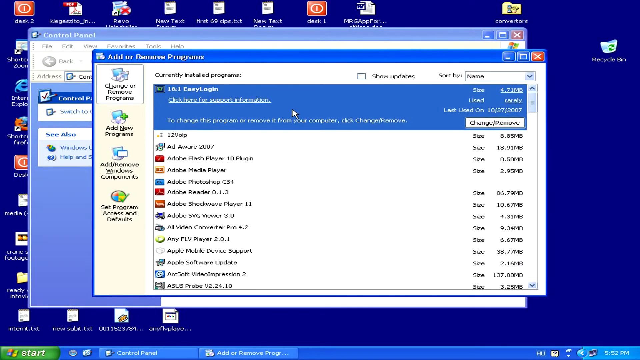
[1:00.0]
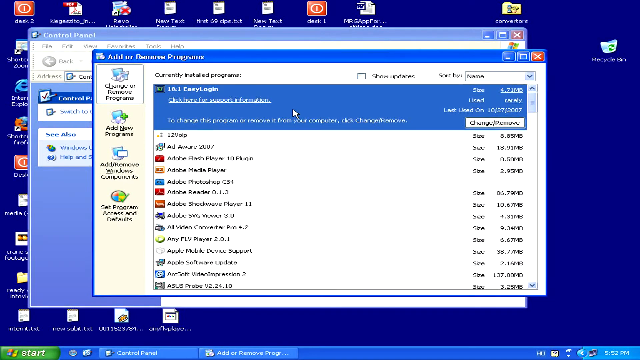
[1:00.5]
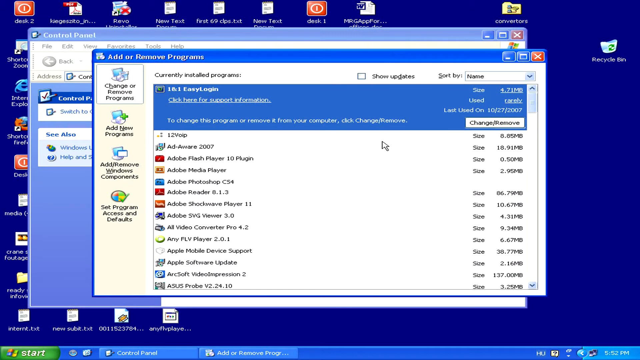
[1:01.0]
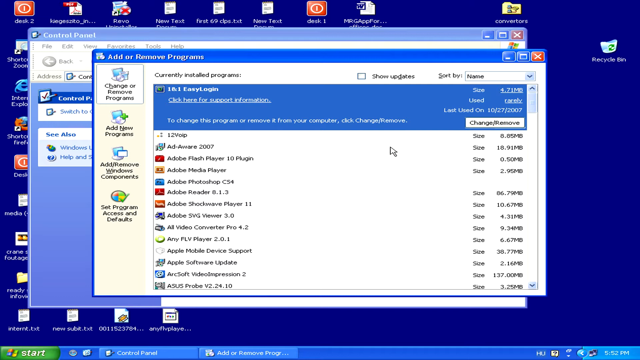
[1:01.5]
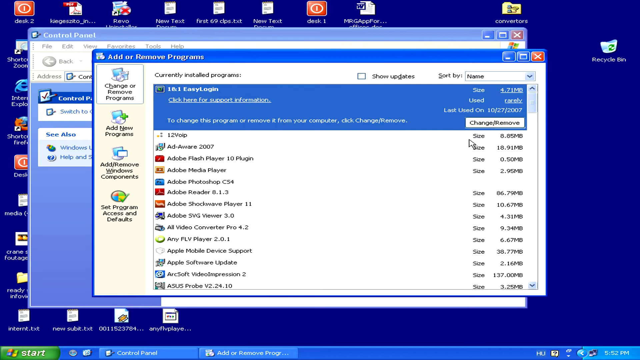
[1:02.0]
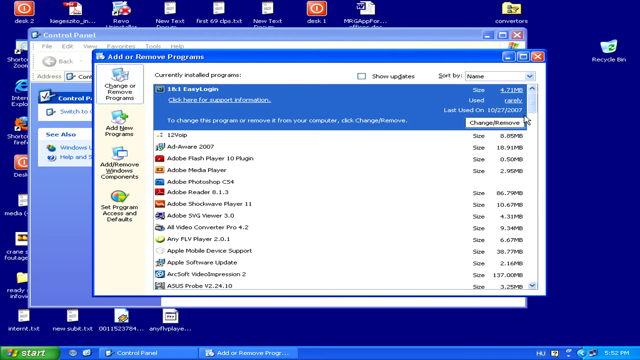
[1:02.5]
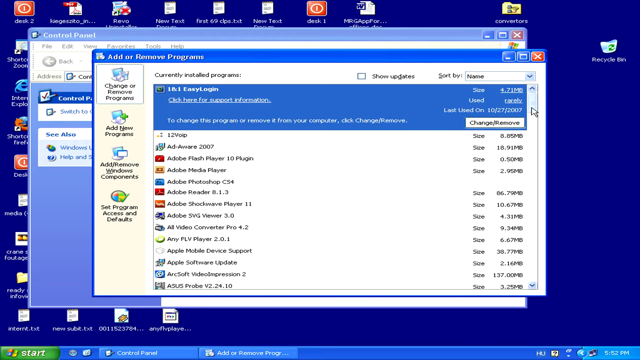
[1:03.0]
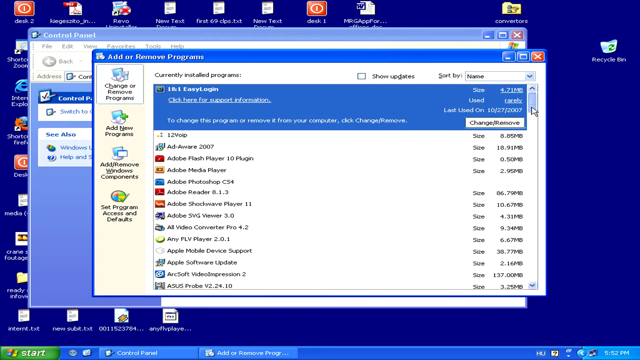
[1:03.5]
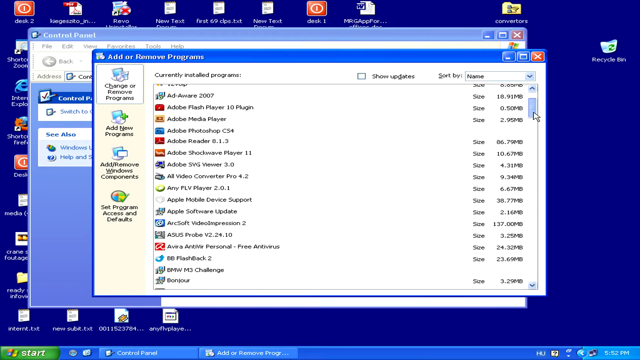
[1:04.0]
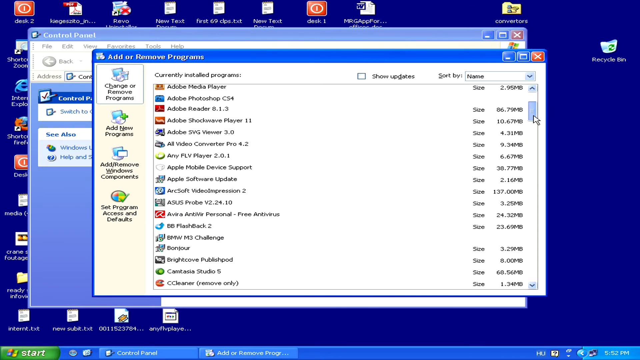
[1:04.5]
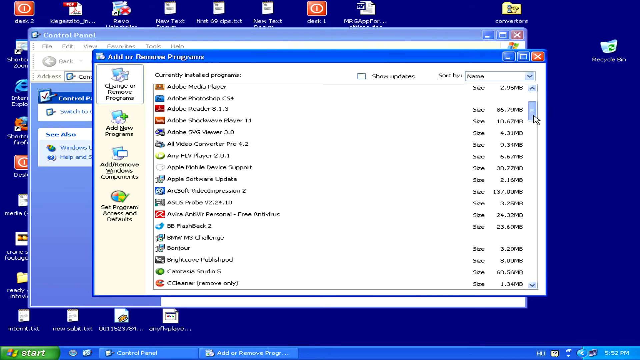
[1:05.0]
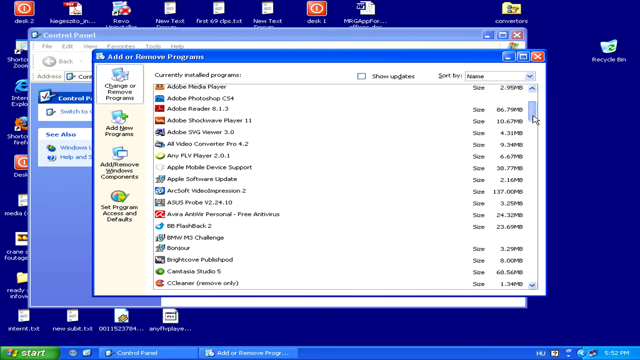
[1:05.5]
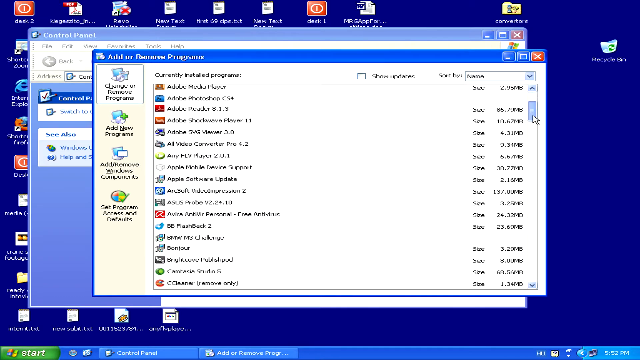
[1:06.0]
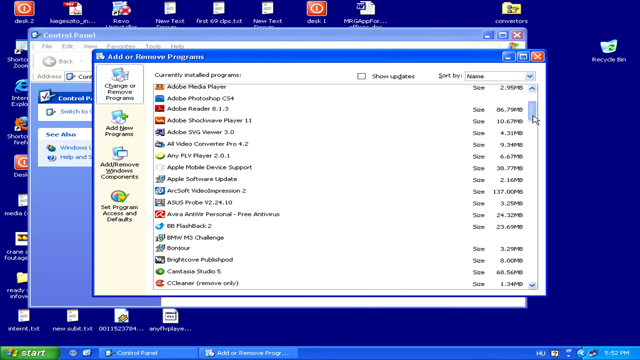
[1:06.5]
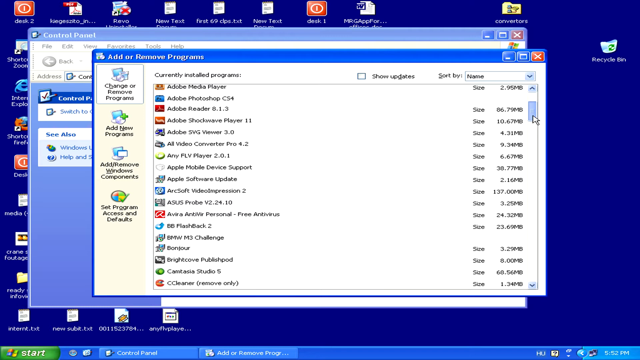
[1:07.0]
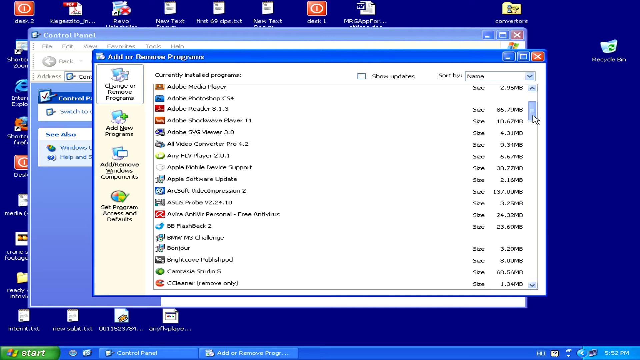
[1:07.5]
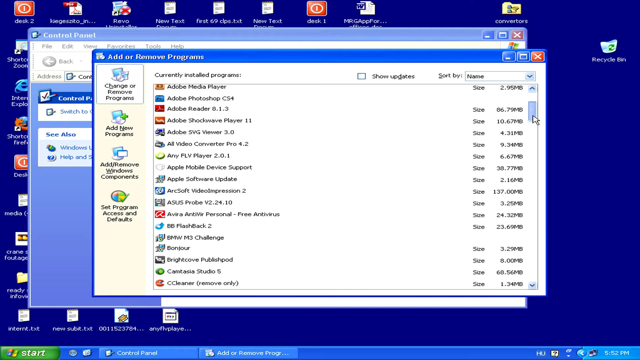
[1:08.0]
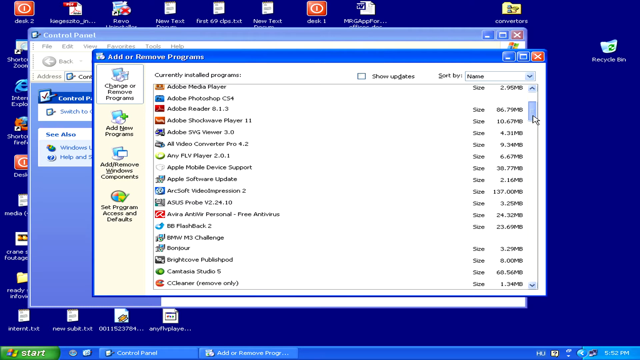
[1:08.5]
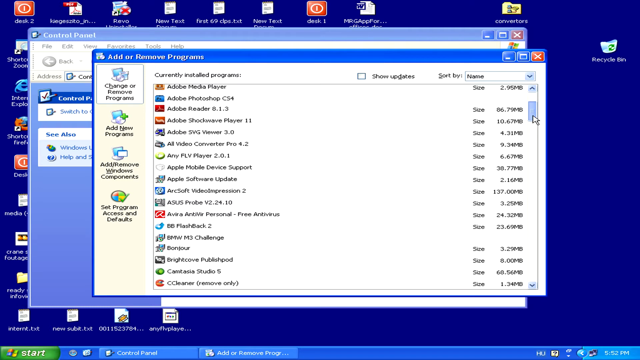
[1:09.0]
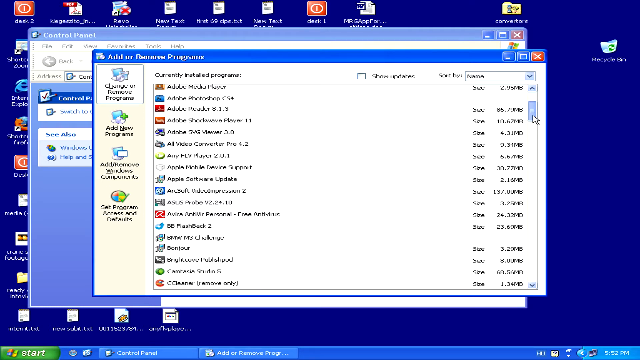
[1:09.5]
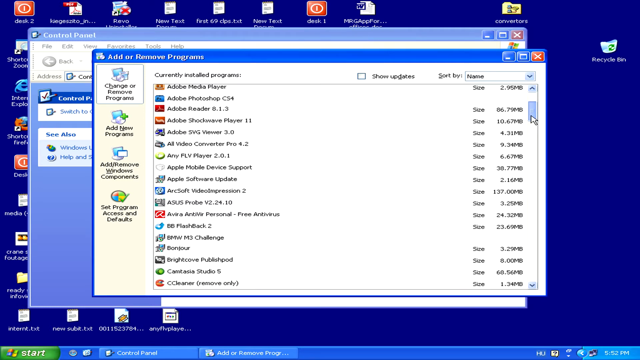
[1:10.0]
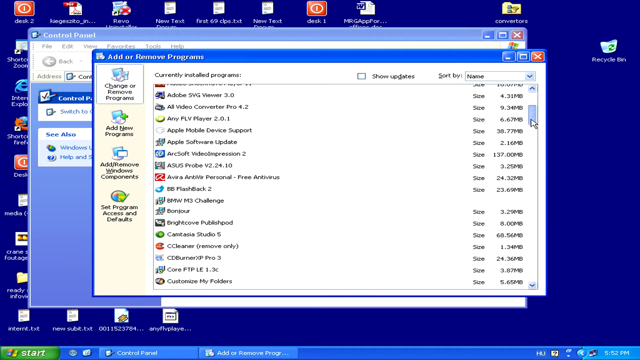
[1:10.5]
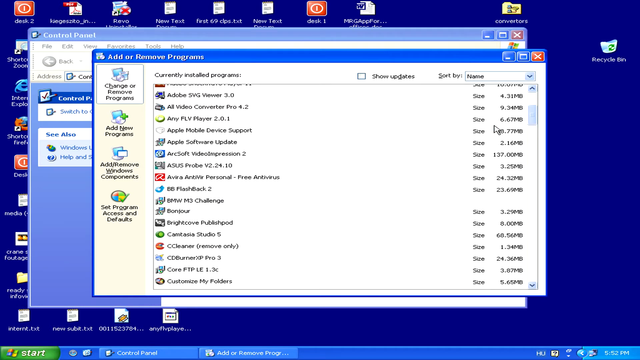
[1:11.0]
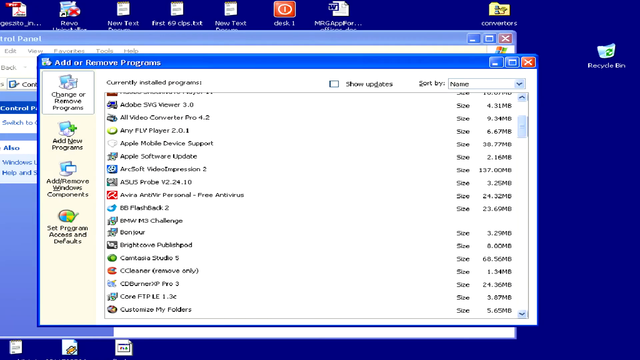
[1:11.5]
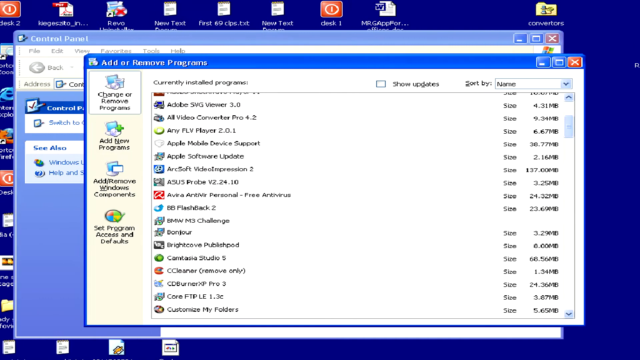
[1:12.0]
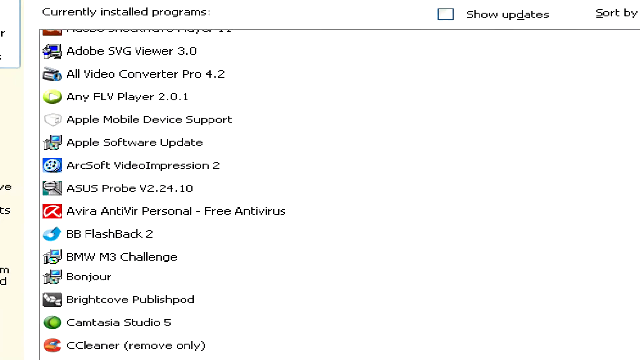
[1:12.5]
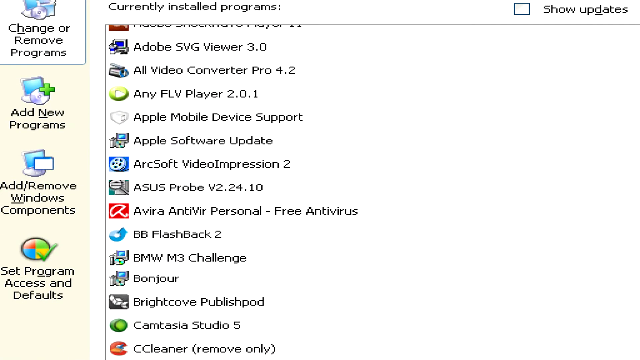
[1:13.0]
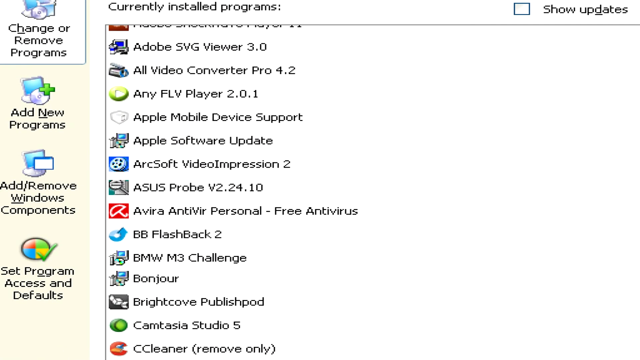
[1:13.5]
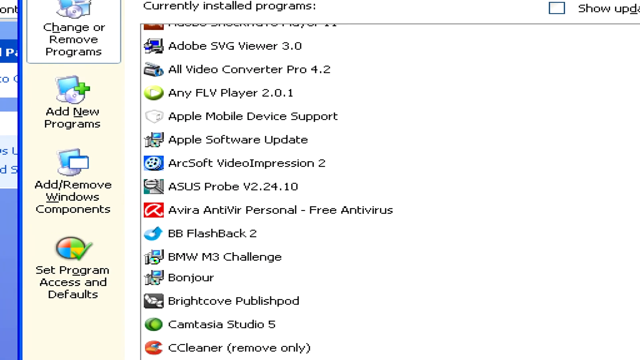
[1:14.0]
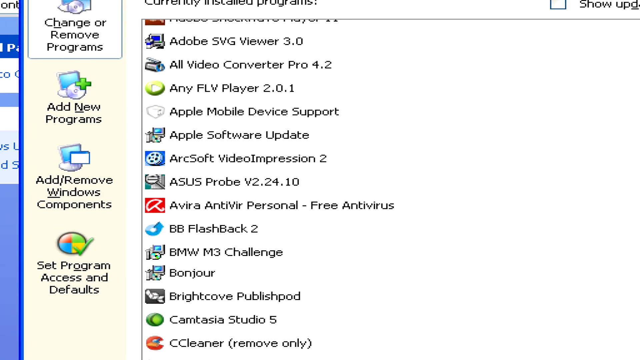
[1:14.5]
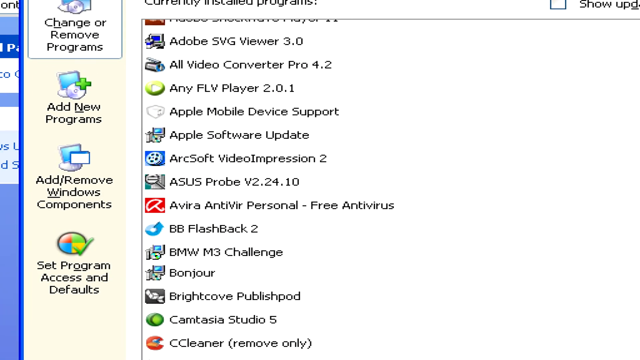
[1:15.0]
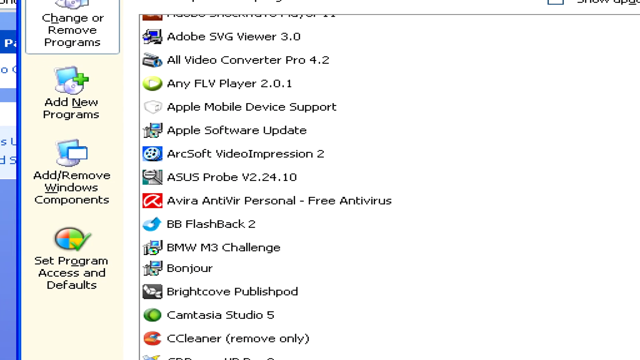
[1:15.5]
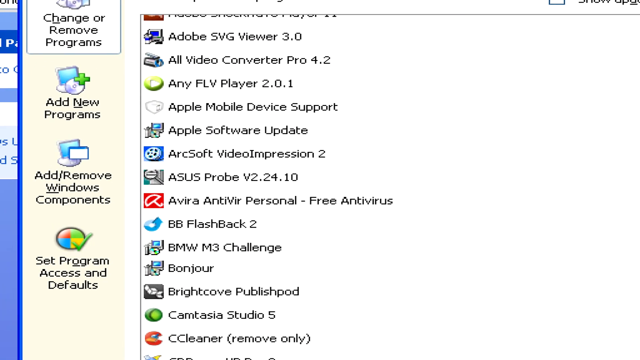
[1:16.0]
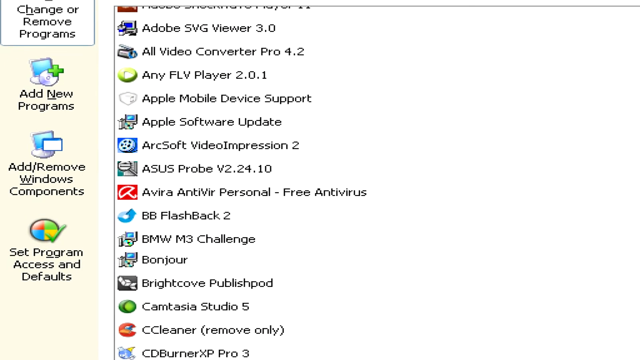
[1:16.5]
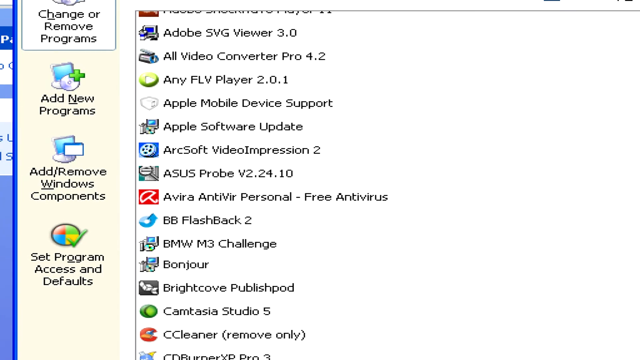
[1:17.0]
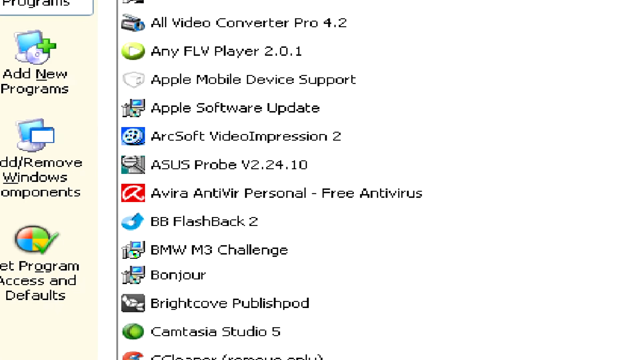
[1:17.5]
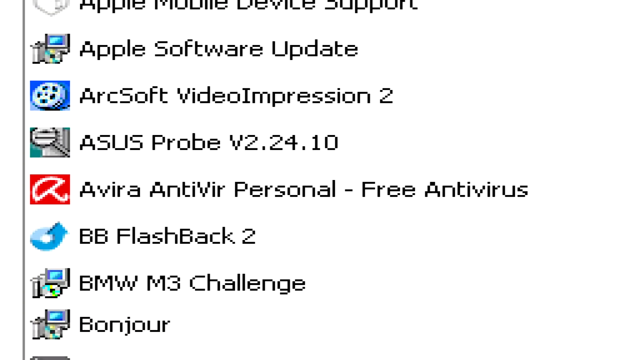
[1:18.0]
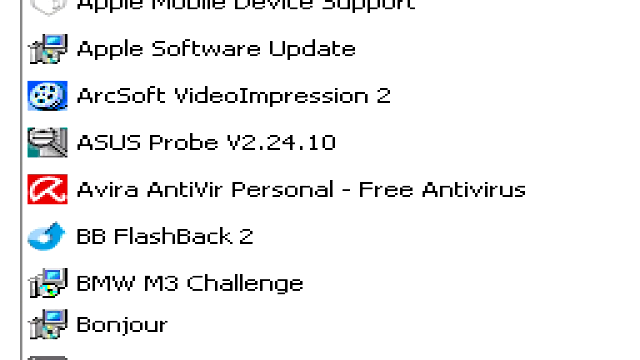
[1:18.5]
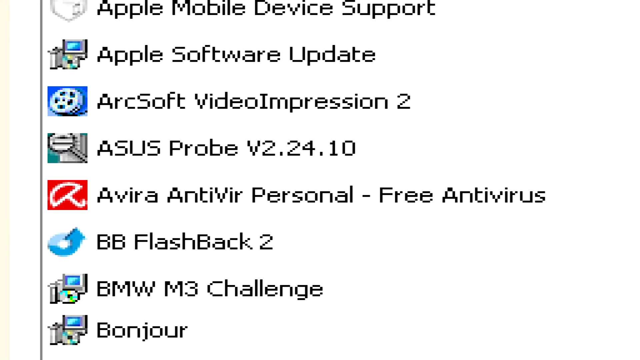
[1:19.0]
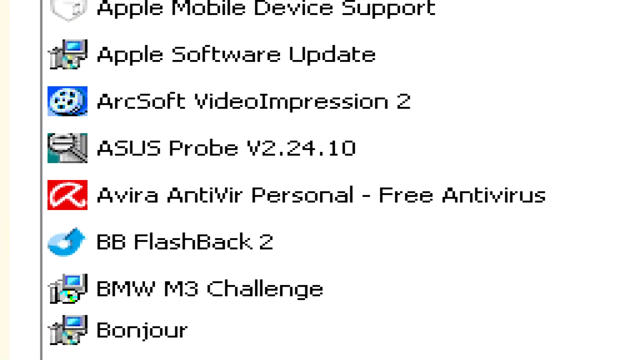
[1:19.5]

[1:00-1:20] The old Windows desktop software continues to be shown; no web browser has been opened. Items include All Video Converter, Adobe SVG, Adobe Shockwave, and Asus Probe.